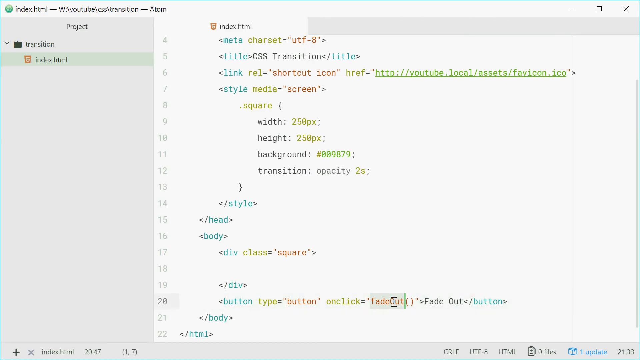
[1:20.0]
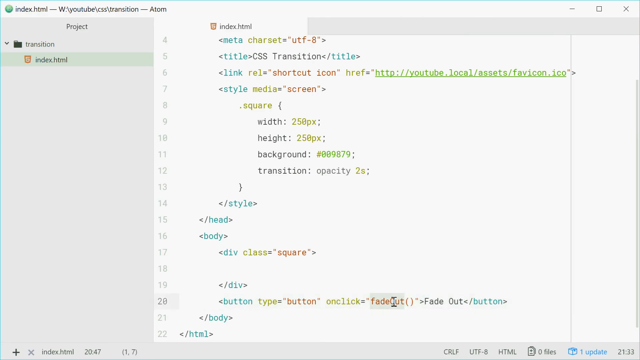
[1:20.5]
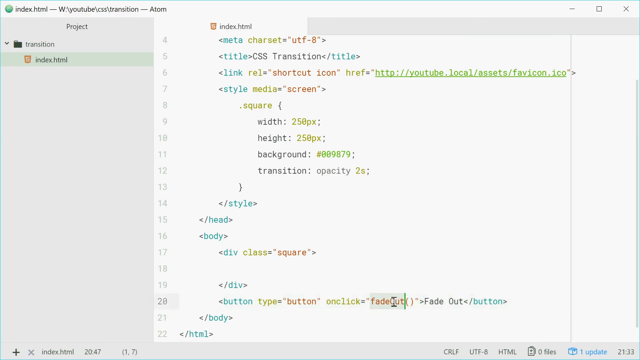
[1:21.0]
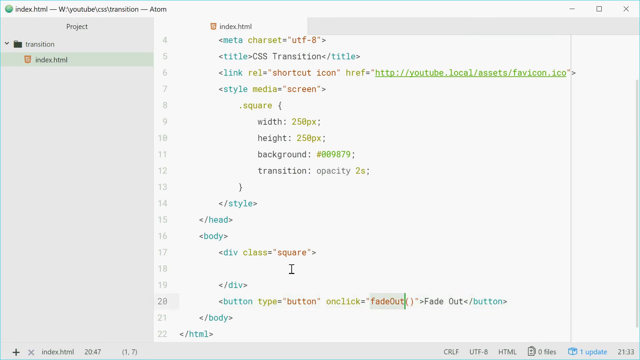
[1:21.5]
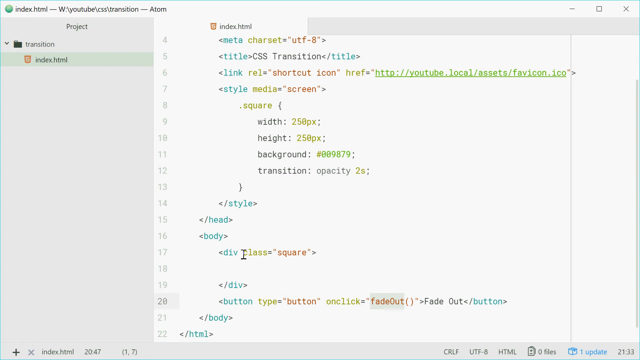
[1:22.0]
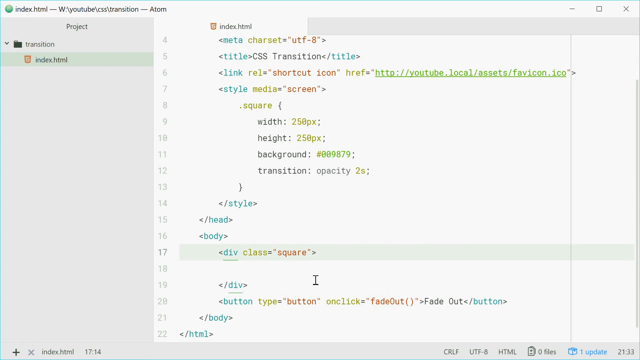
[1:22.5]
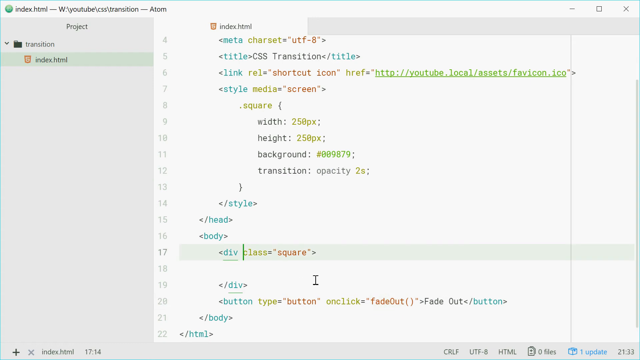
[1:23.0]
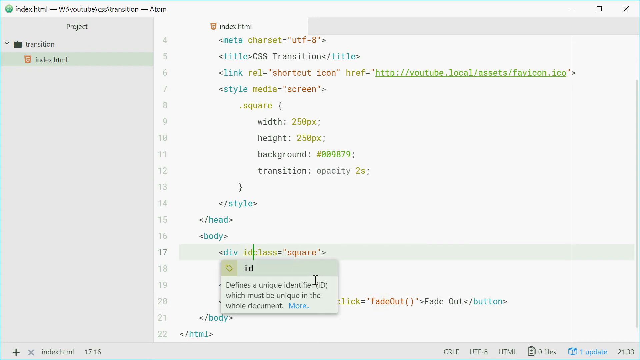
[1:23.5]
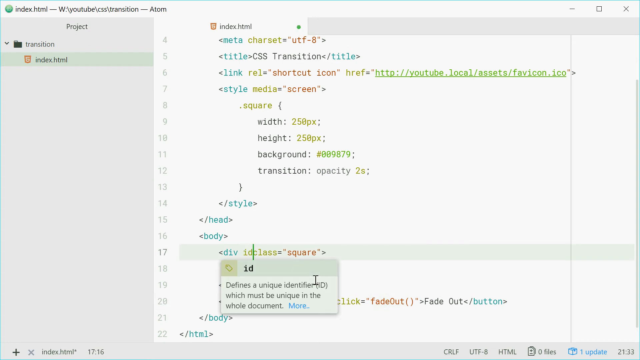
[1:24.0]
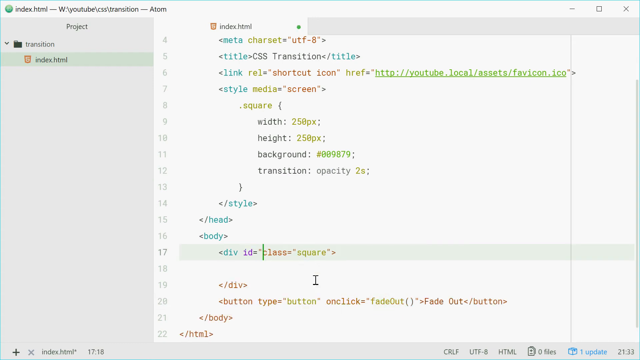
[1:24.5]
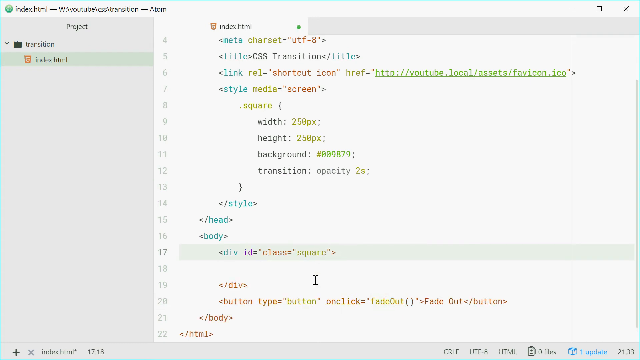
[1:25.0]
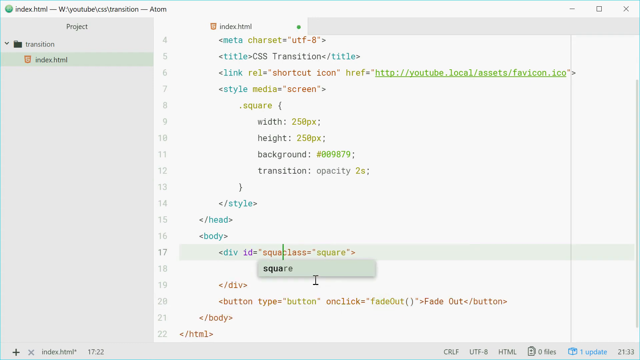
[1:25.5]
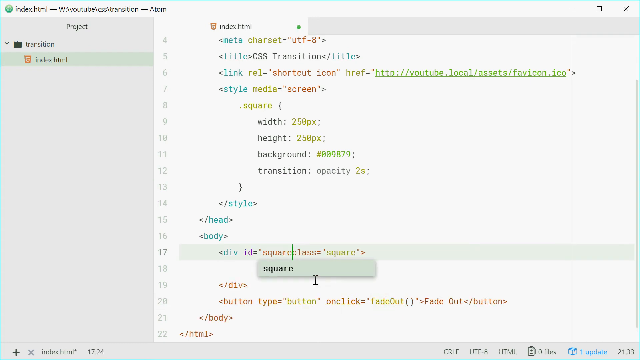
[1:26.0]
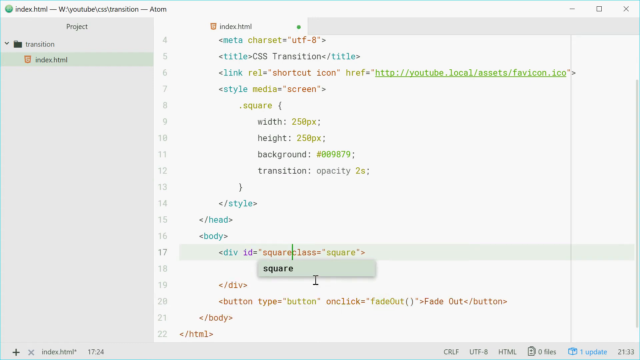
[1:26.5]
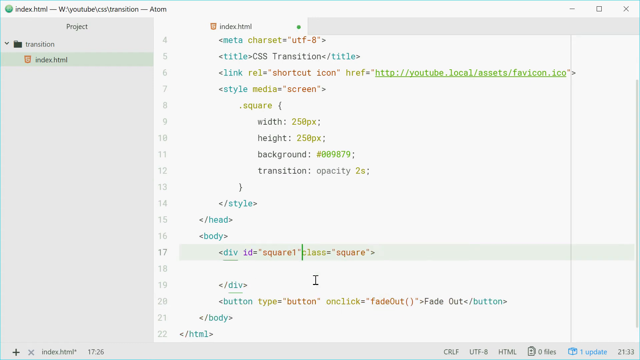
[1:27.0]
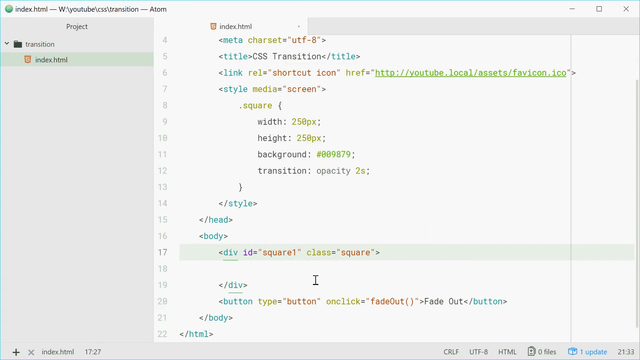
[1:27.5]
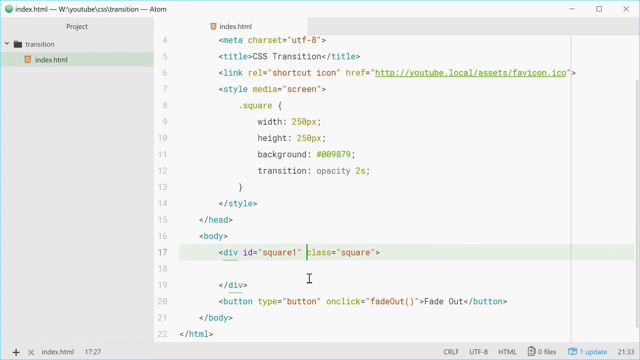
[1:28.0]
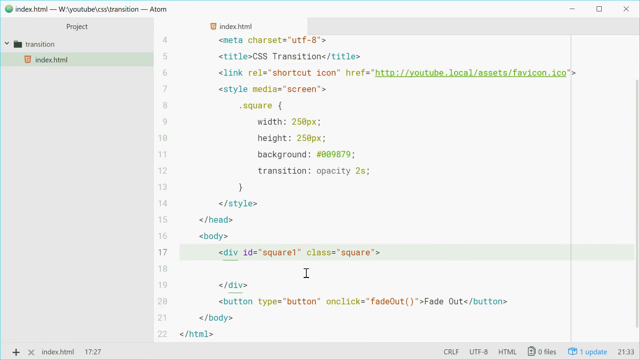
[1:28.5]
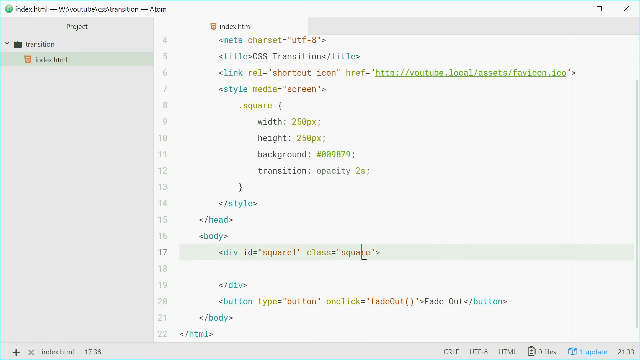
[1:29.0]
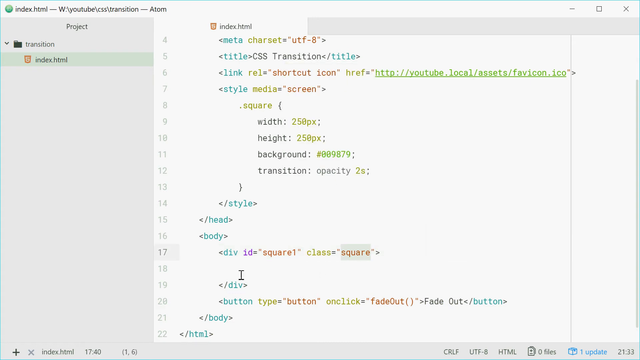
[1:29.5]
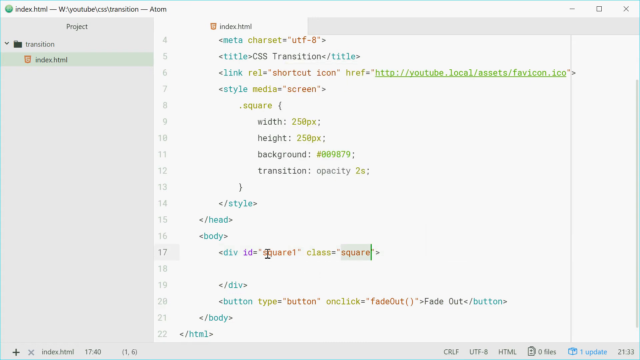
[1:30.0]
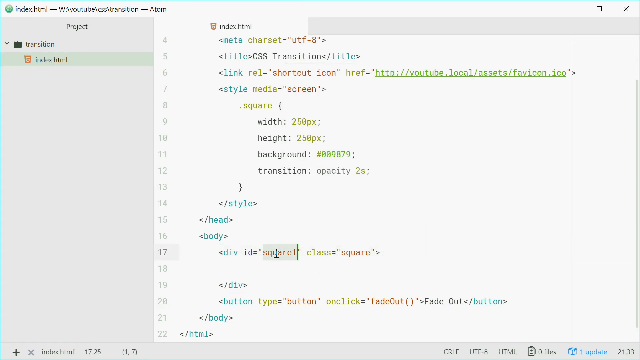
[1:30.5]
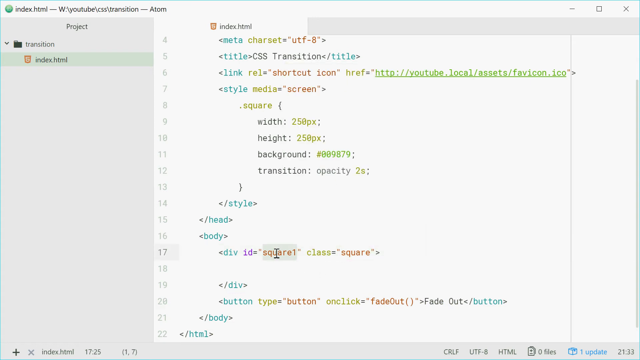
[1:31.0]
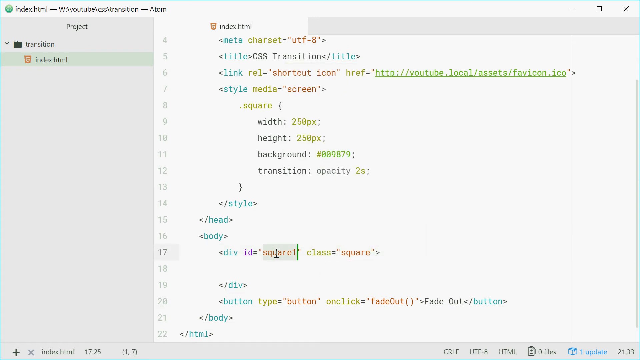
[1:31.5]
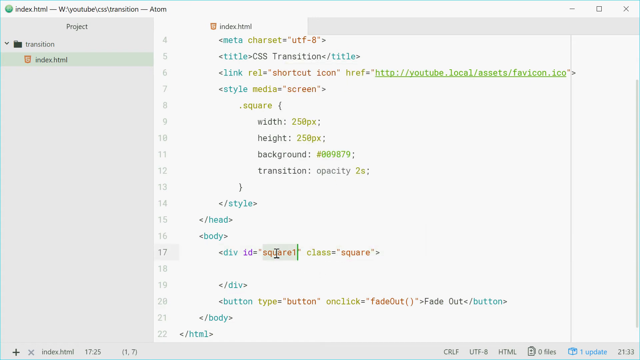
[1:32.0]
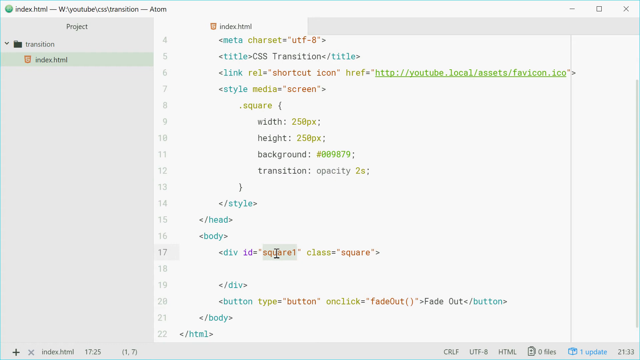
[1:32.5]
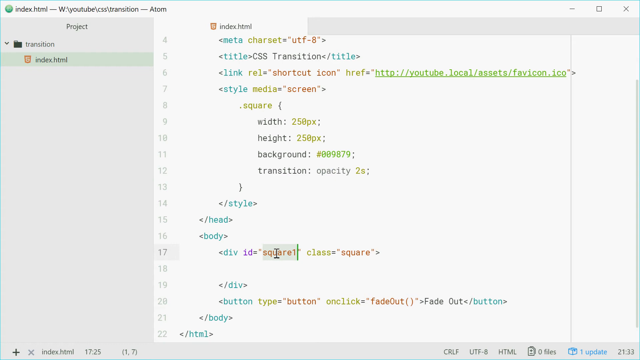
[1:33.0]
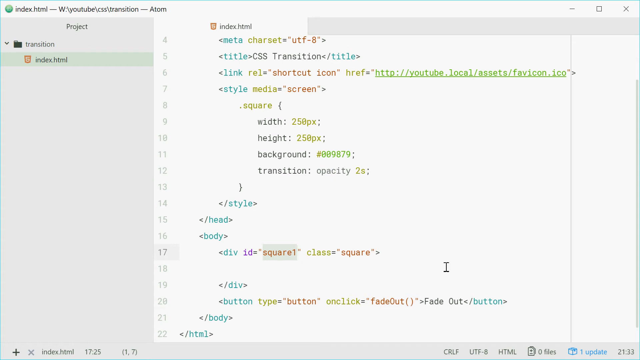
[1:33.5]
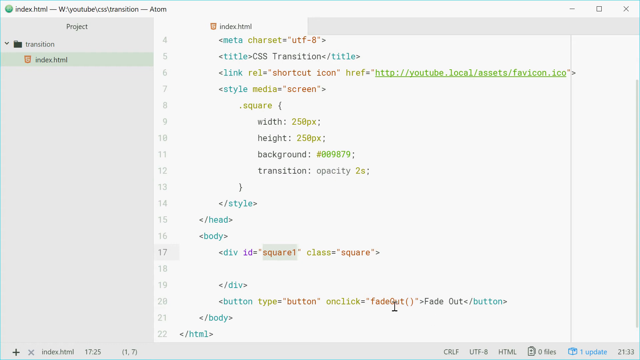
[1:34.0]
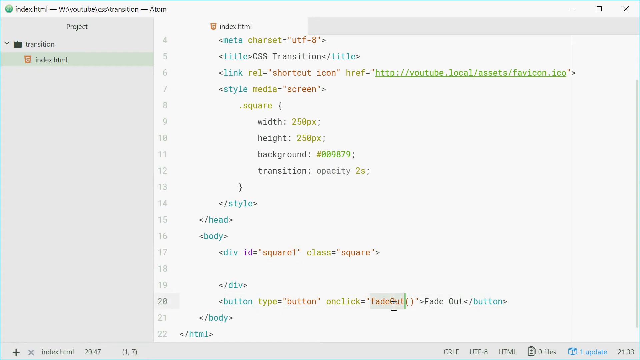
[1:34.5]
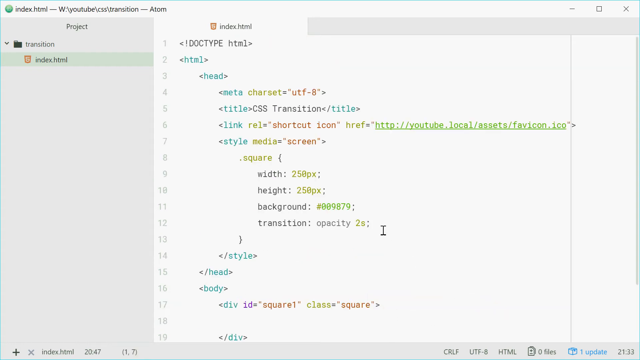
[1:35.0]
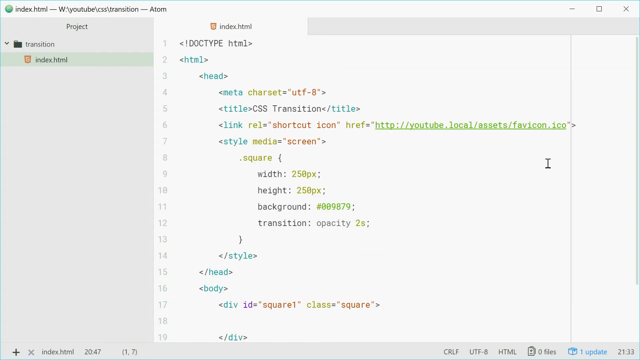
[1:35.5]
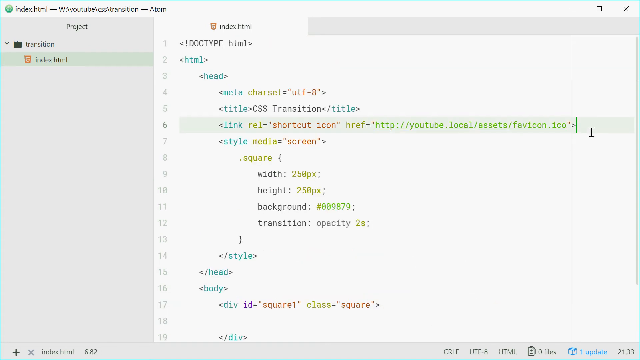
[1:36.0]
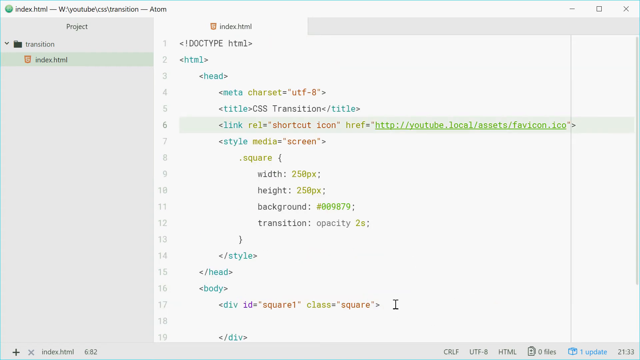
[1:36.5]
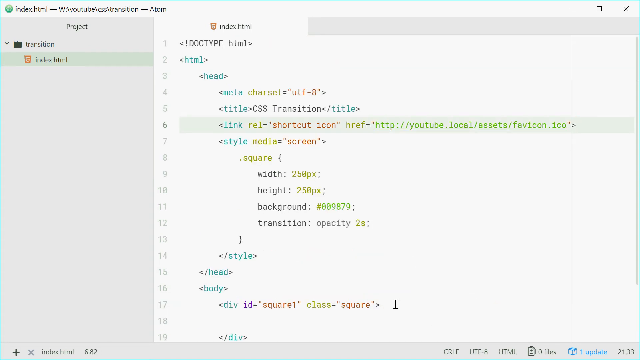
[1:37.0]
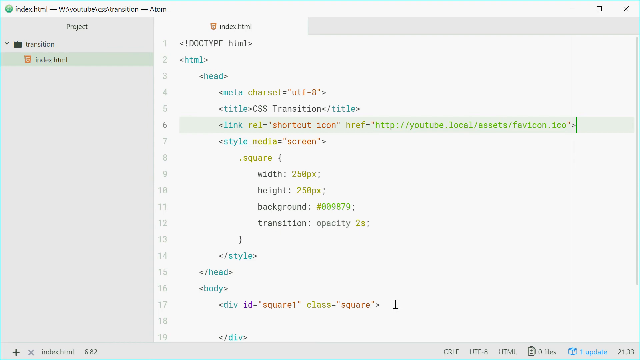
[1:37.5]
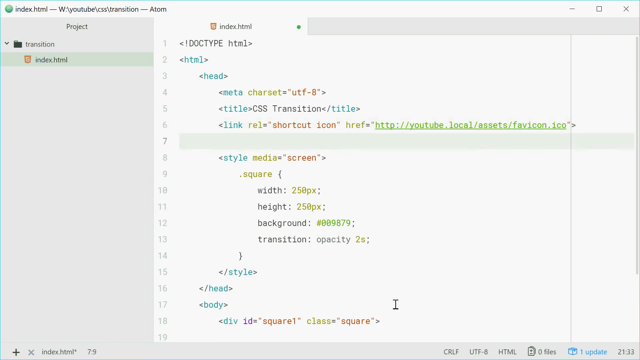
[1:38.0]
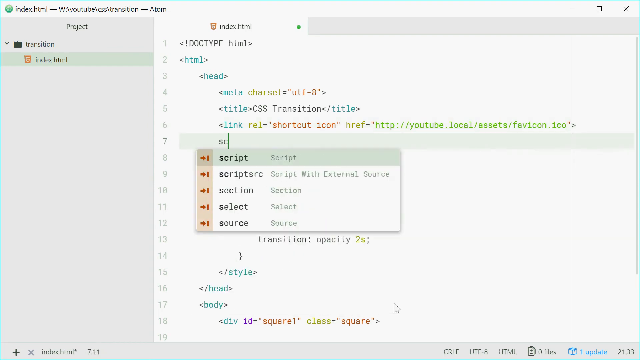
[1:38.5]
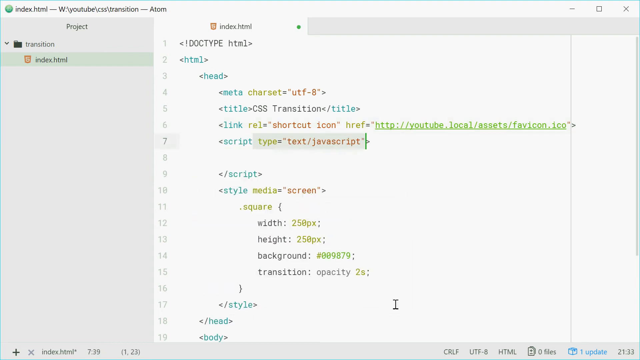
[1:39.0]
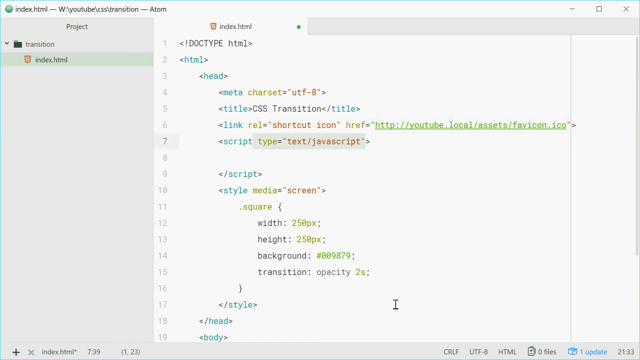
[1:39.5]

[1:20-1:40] The man is back on the code page editing. He seems to be changing the division line, edits it to id equals square one, goes back to the fade out part to edit something, and then edits the style section. The video pauses. As he edits, he scrolls through the code and adds a few characteristics, and the code seems to need more editing before it works.